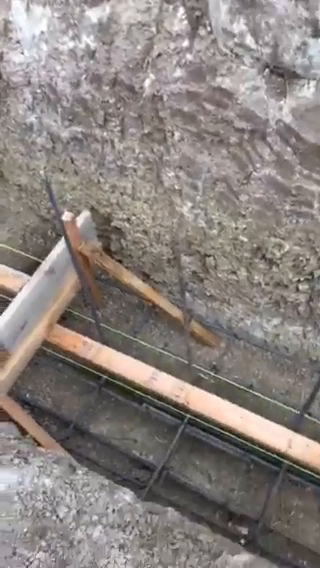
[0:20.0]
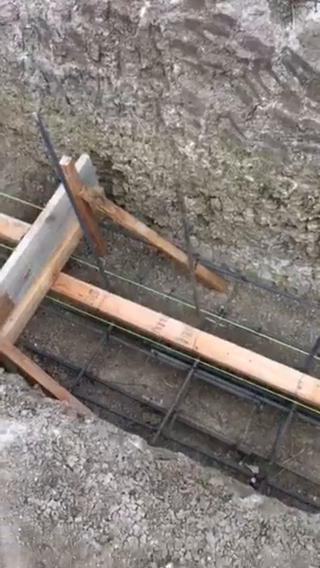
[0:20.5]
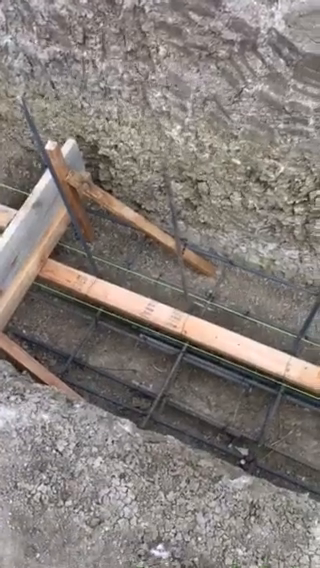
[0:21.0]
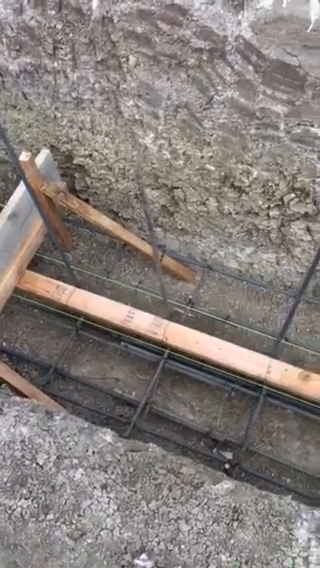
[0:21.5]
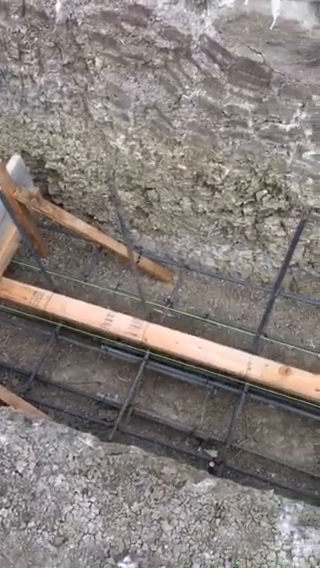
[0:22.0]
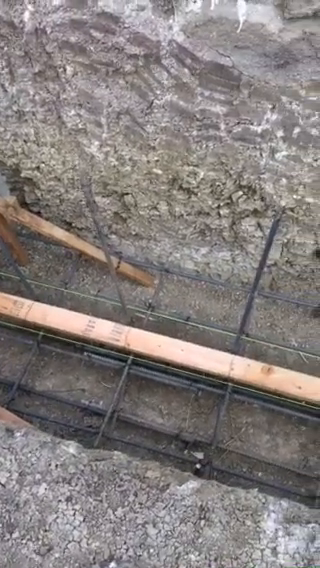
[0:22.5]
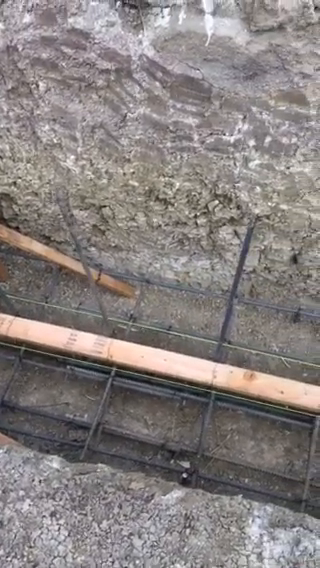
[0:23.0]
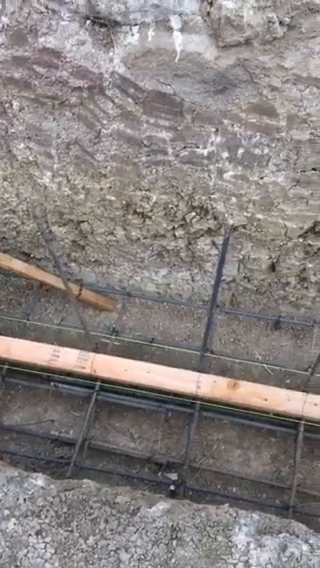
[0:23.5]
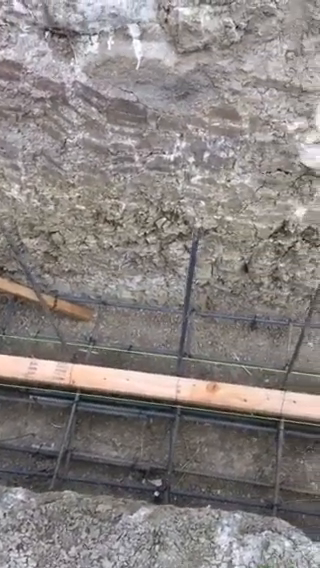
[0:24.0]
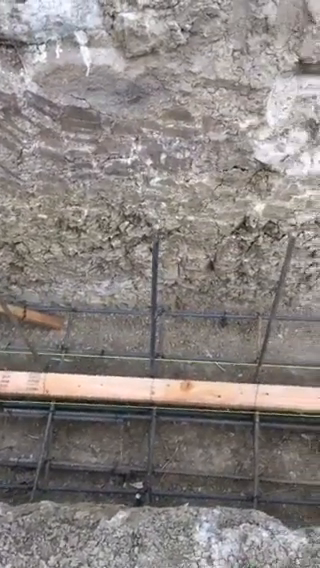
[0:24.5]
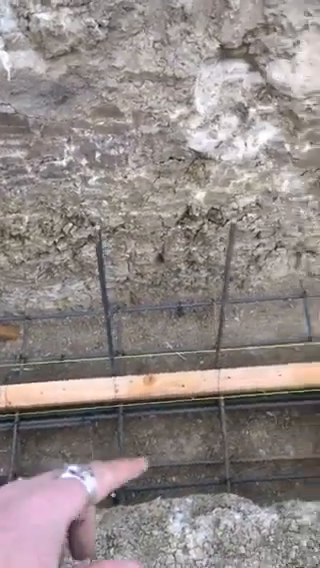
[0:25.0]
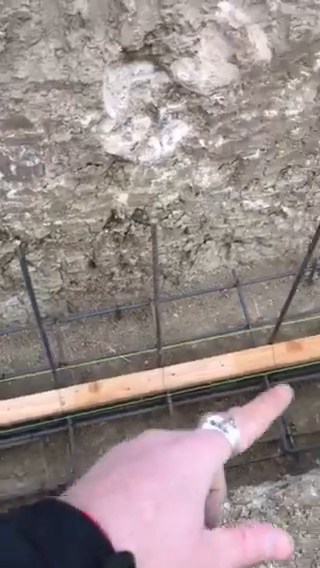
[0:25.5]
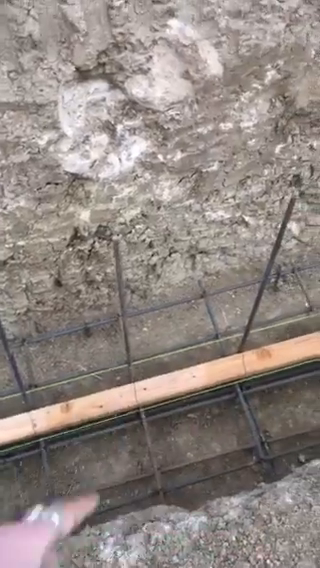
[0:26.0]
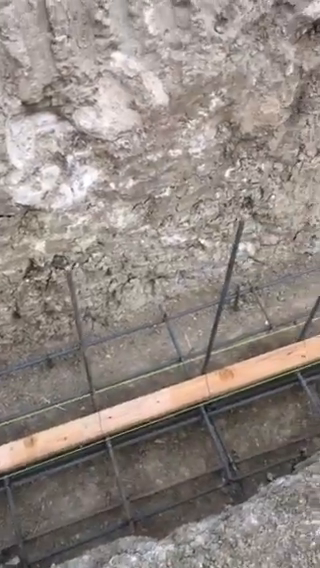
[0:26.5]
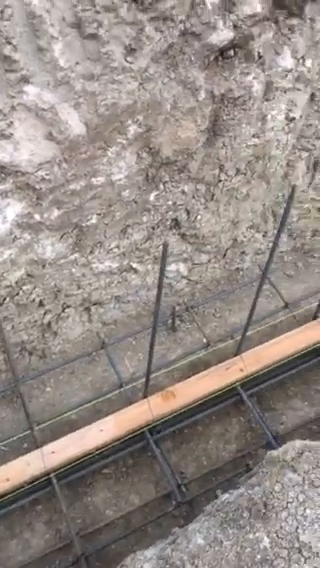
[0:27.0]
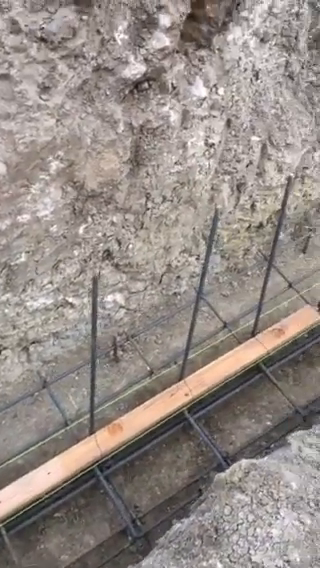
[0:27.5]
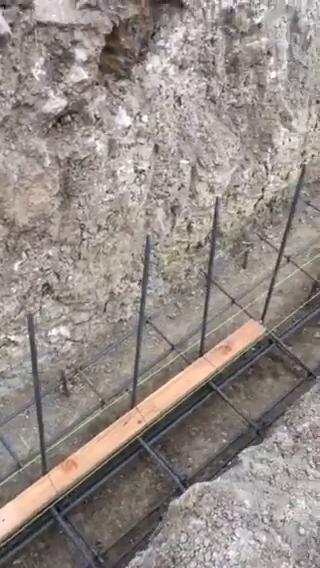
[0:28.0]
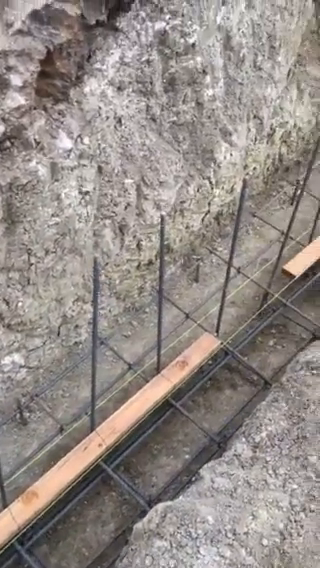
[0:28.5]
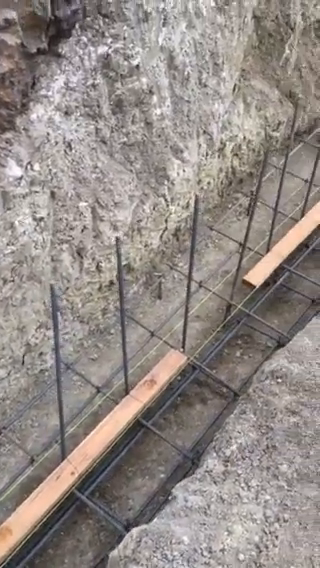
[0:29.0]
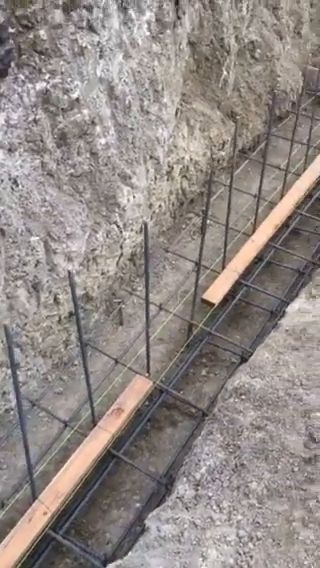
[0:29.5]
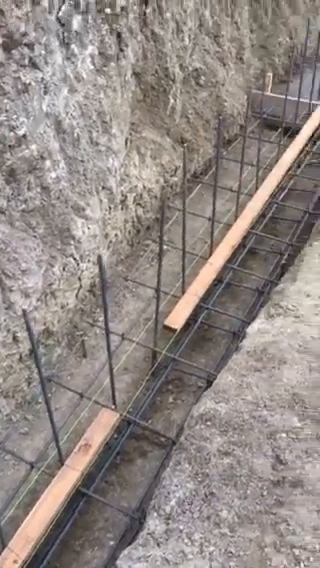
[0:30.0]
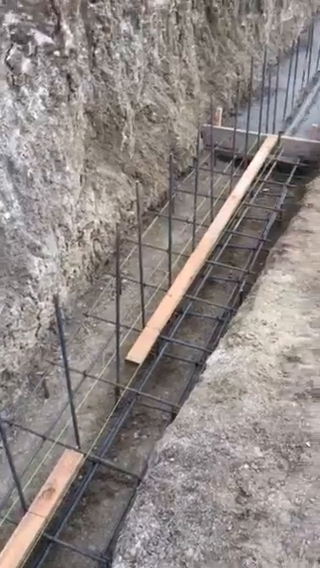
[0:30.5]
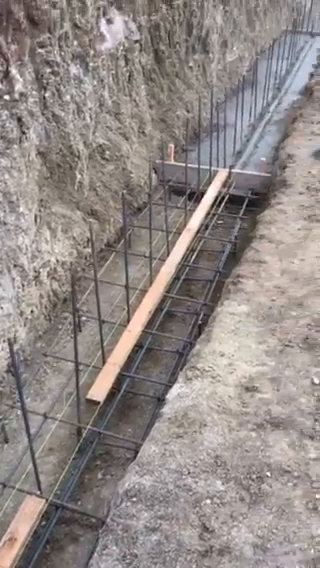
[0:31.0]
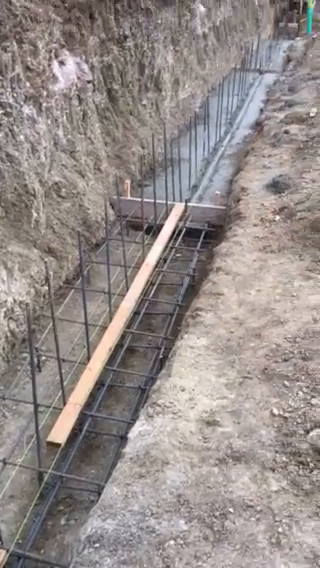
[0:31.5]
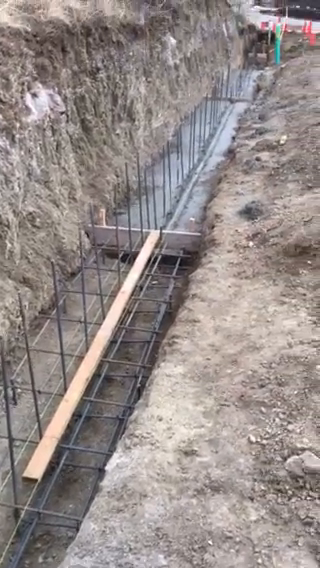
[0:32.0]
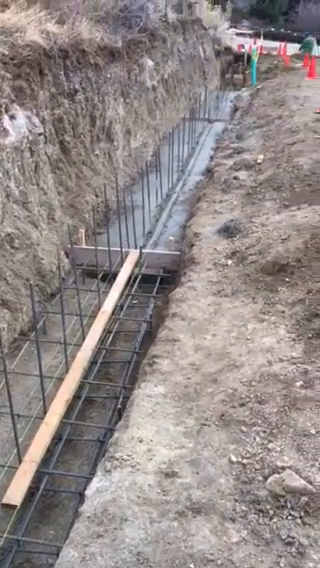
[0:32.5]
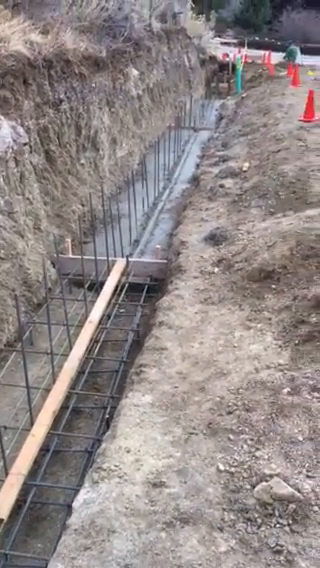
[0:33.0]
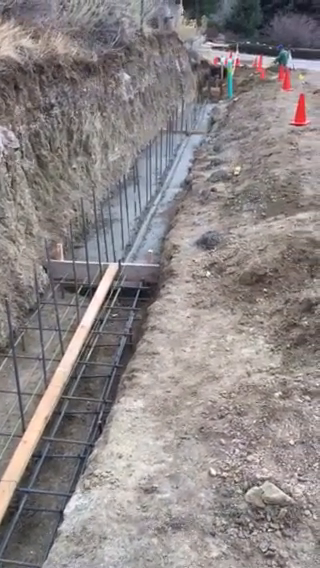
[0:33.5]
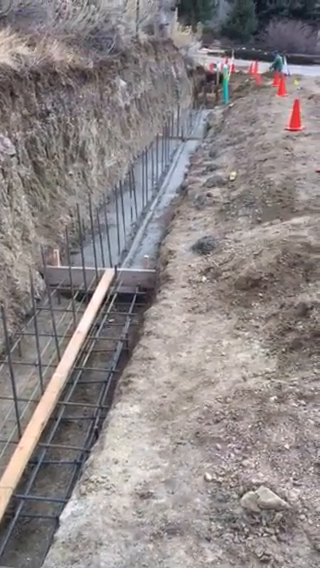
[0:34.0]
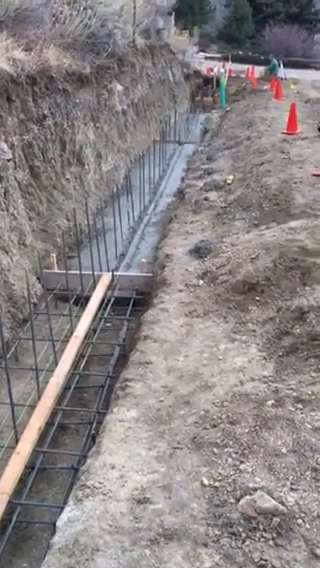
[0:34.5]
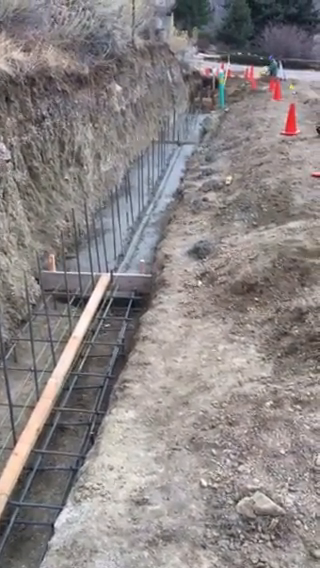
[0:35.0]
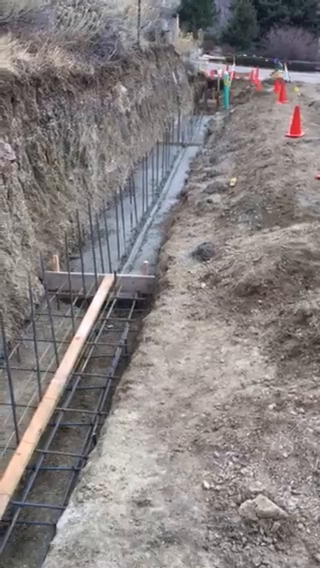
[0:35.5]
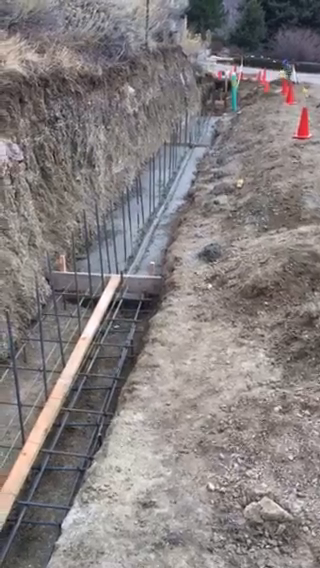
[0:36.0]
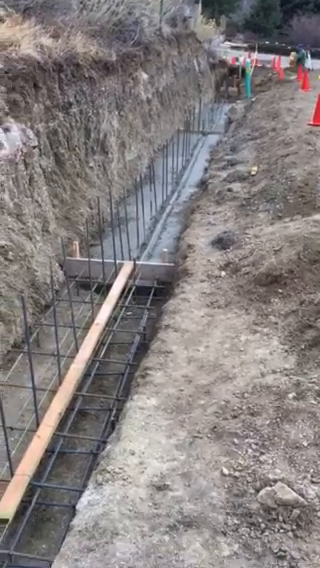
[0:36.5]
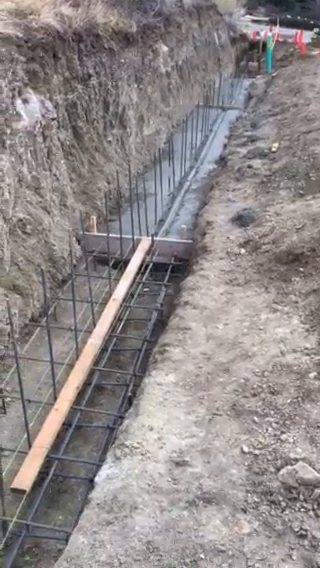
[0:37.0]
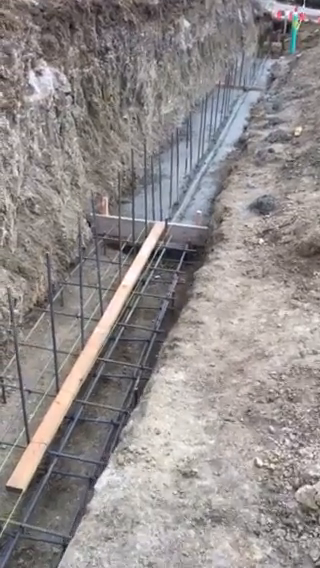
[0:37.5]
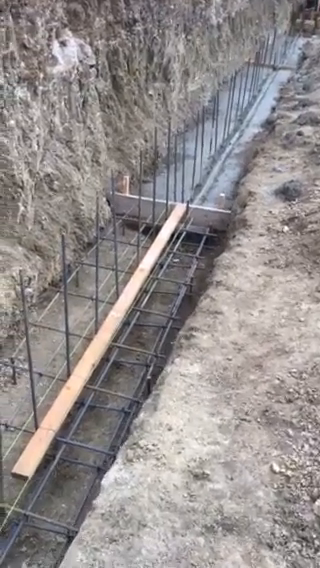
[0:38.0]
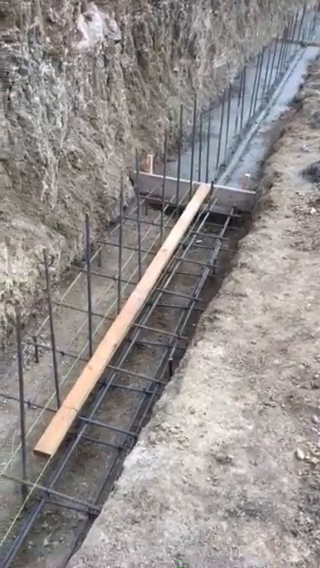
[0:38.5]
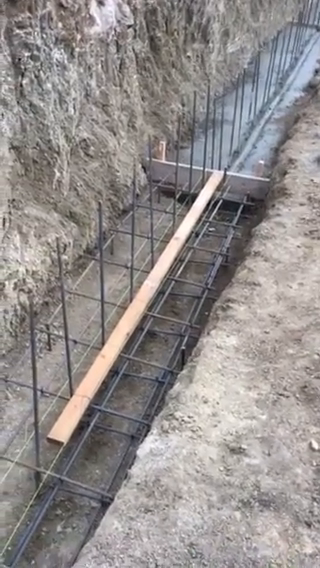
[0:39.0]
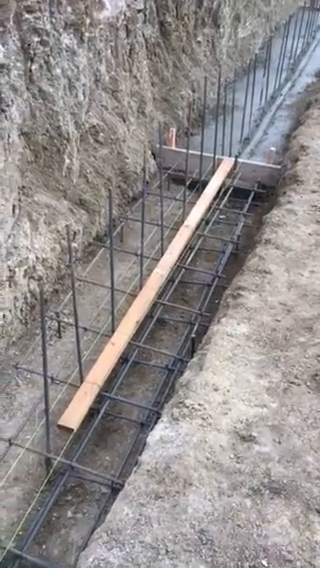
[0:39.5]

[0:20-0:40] The camera closely and slowly moves along the length of the tunnel toward where it begins, where two people, perhaps workmen, are along and on top of the tunnel. There are some red markers. A deep layer of stones has been excavated all along, and a fairly long piece of wood is placed in the middle, supported by iron plates, so well made that it looks like a floor. A man is pointing: a hand with a ring, perhaps a left hand, points toward where the furrow began. At the end, a person in green apparel appears to be doing something alongside the excavation.